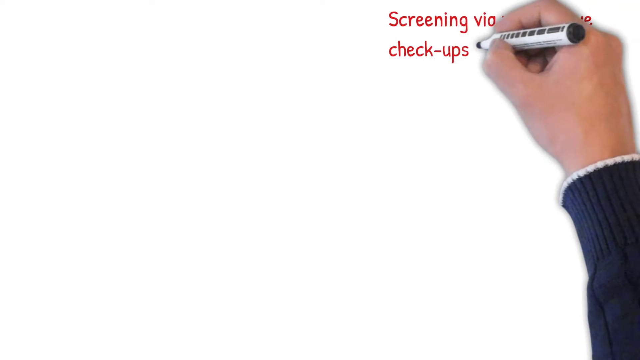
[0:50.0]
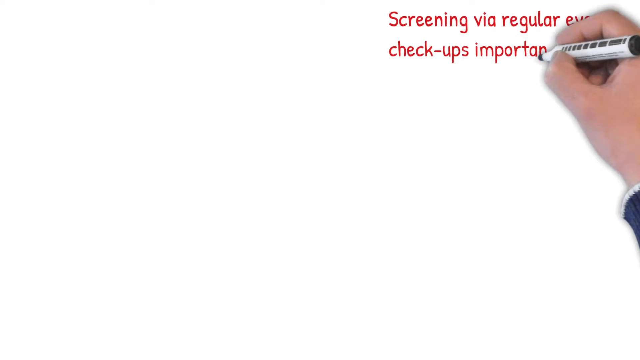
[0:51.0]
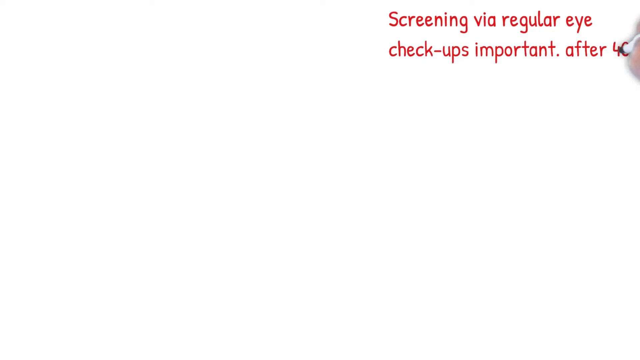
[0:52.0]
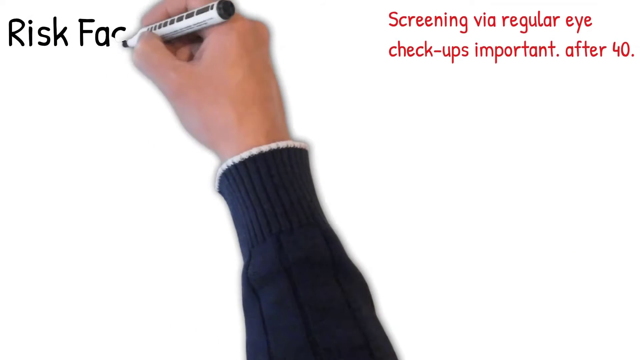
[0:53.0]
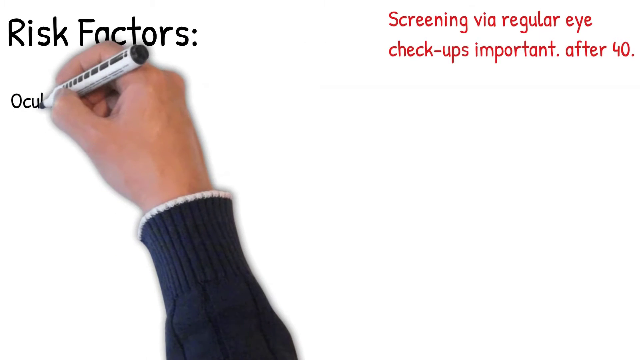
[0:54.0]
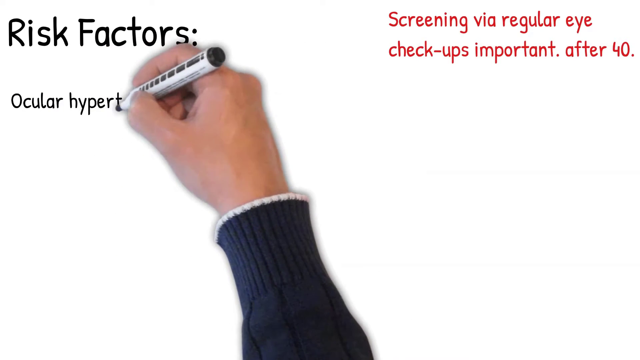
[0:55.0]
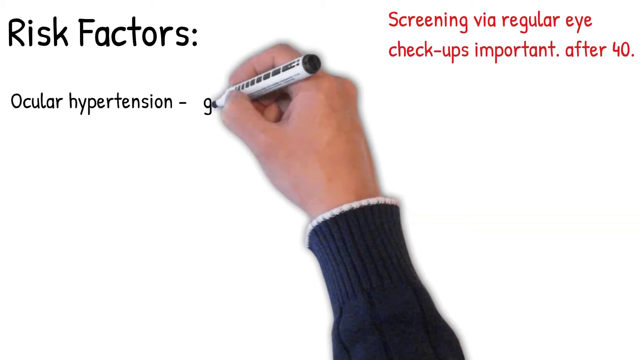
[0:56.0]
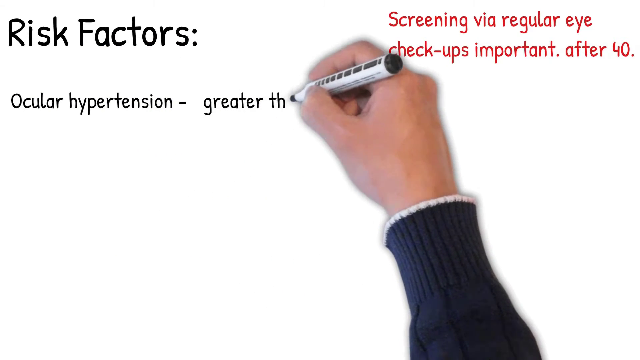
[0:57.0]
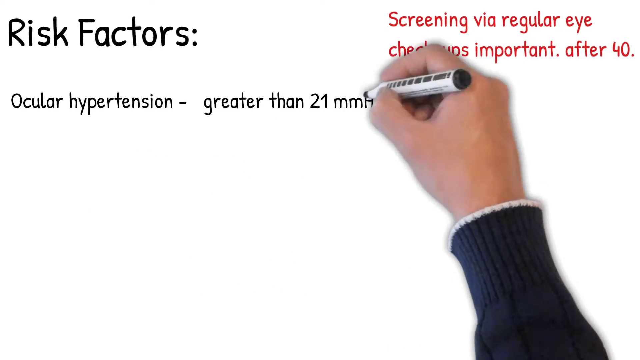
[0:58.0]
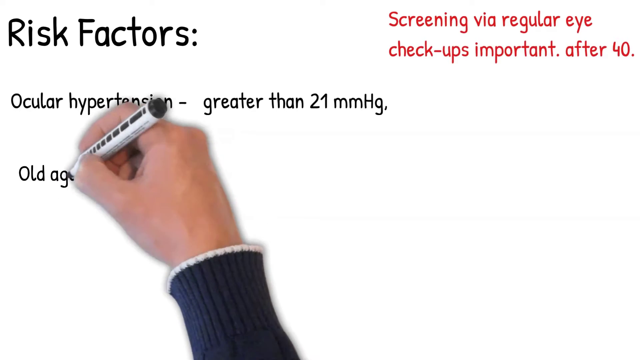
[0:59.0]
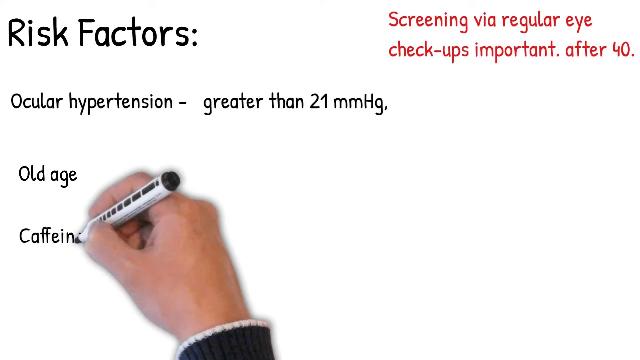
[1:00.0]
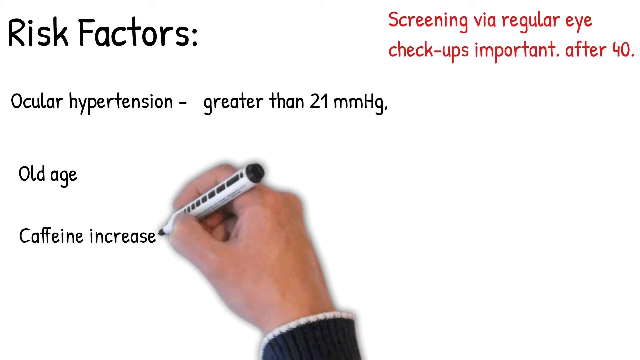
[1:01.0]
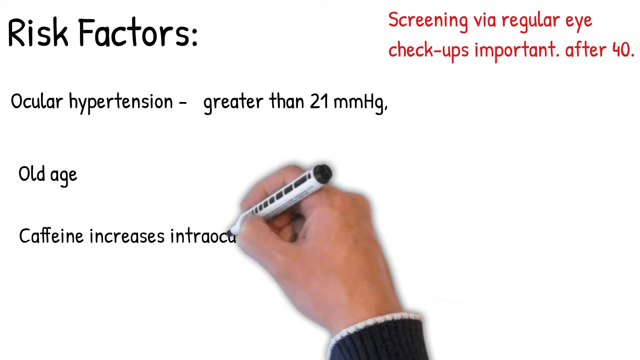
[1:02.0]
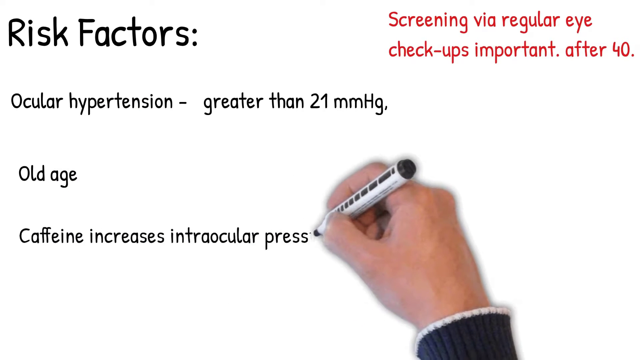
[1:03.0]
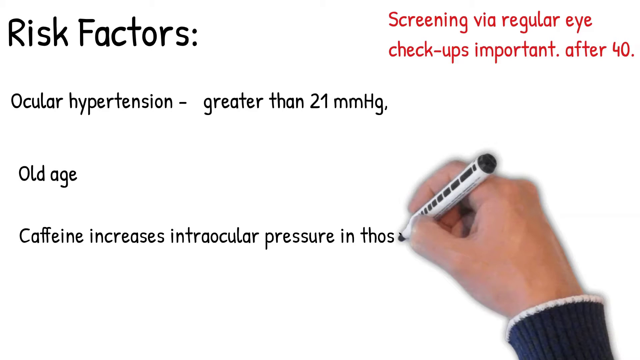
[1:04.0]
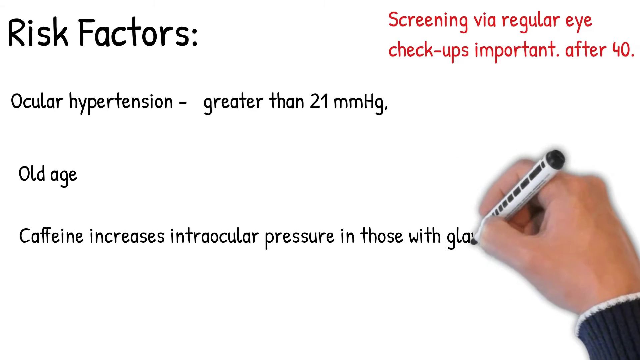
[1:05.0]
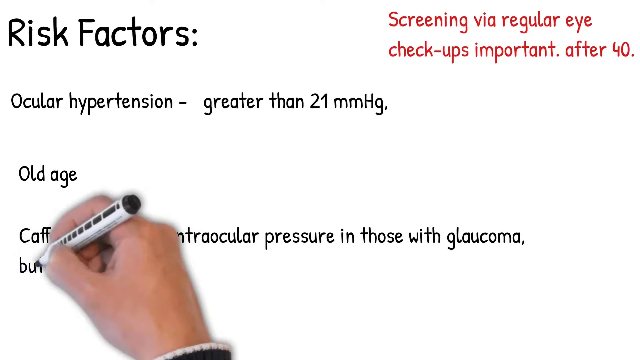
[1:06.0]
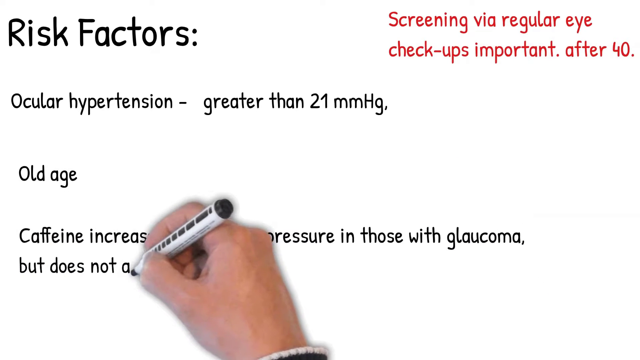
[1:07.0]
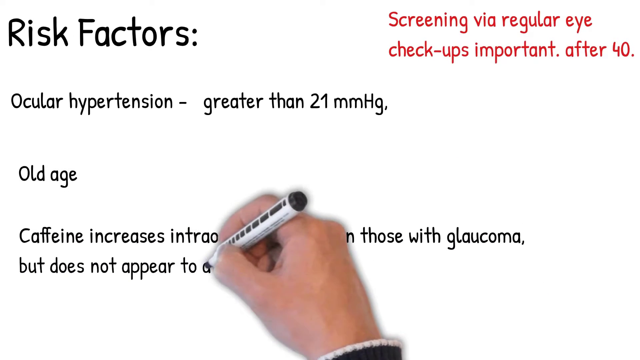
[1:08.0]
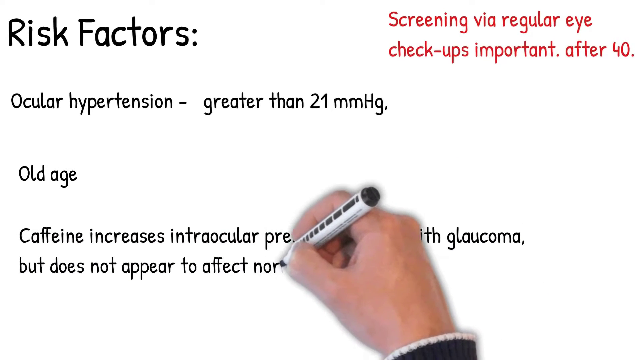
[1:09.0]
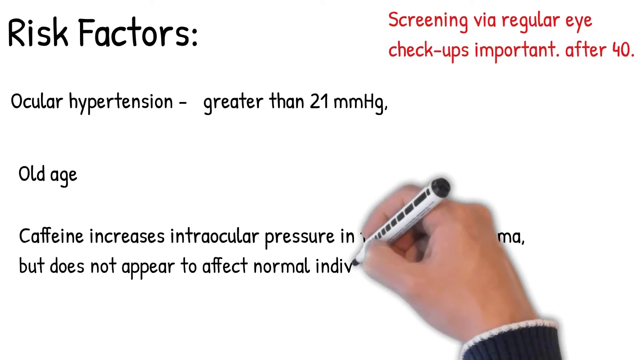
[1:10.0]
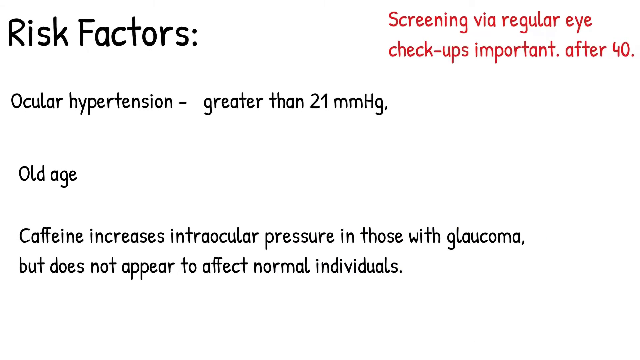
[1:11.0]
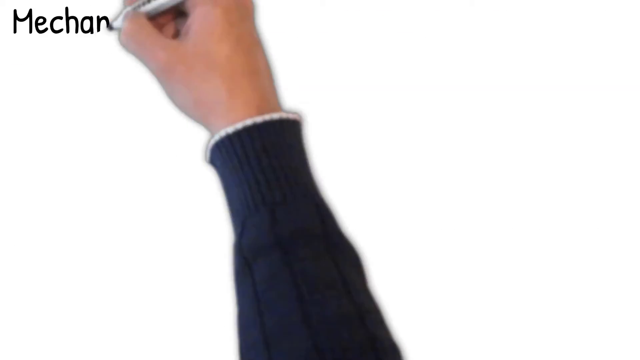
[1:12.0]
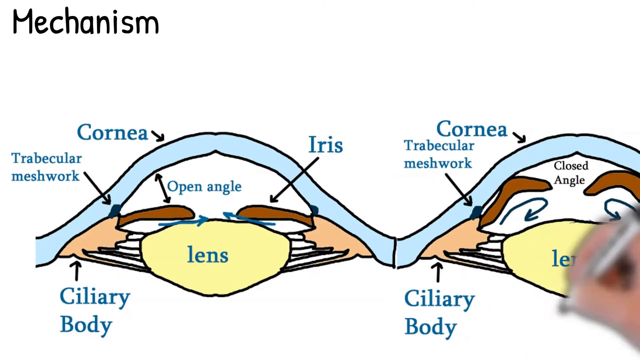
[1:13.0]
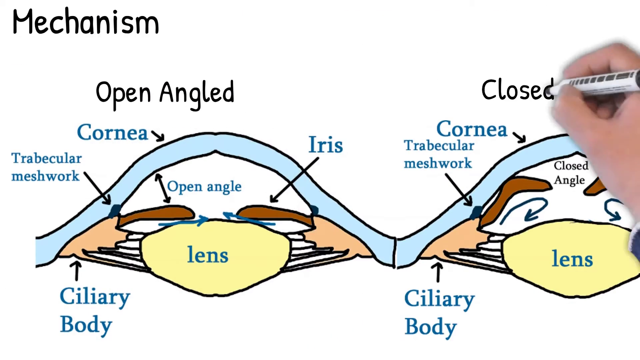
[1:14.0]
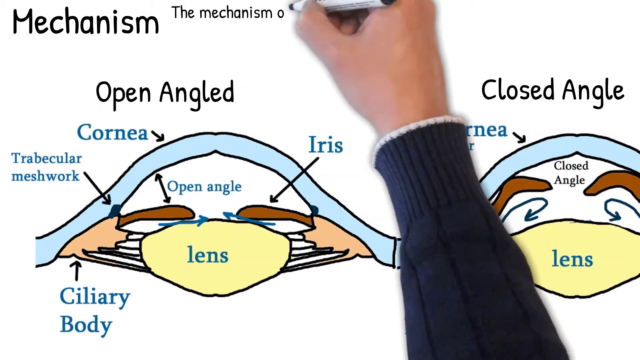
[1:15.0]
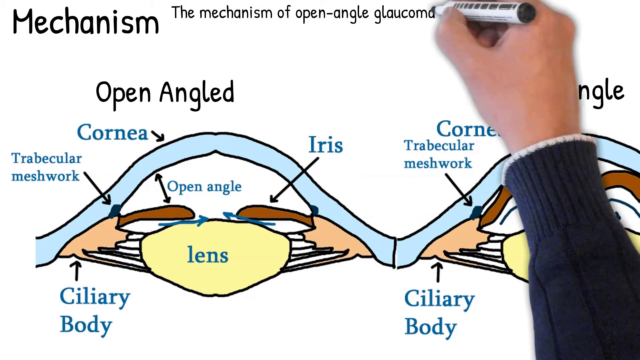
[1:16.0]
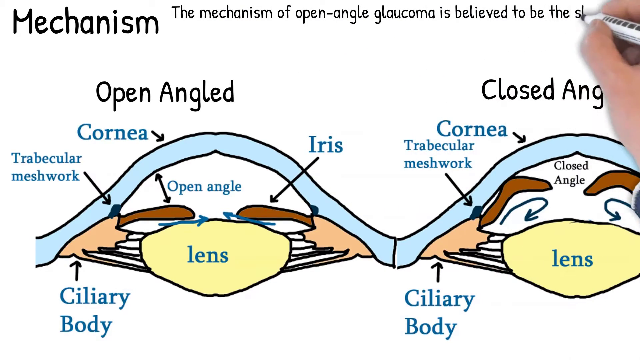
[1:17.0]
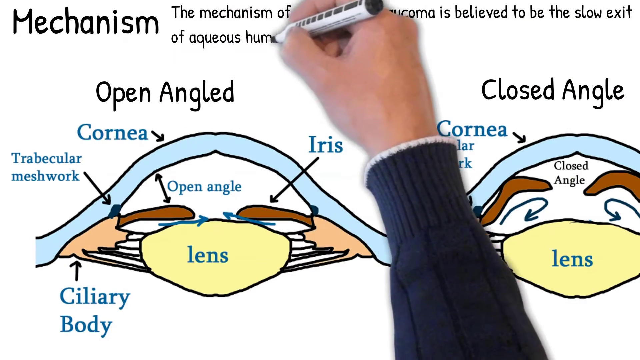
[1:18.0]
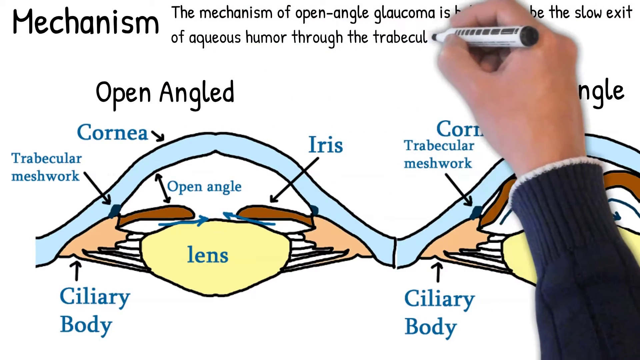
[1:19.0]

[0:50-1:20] On a new blank page, the white male hand with a blue sleeve with white trim writes in red pen at the top right: "screening via regular eye check-ups important after 40". At the top left, in black pen and large letters, it writes "risk factors". Underneath, in smaller writing, are "ocular hypertension, greater than 21 mm Hg", then "old age", then "caffeine increases intraocular pressure in those with glaucoma, but does not appear to affect normal individuals". The page changes to a fresh page. In the top left the pen writes "mechanism", then moves across the page from left to right underneath and appears to sketch a picture: a diagram of a cornea, a lens, the trabecular meshwork, the ciliary body and the iris, with open angle shown on one side and closed angle on the left. At the top of the page the hand writes "the mechanism of open-angle glaucoma".